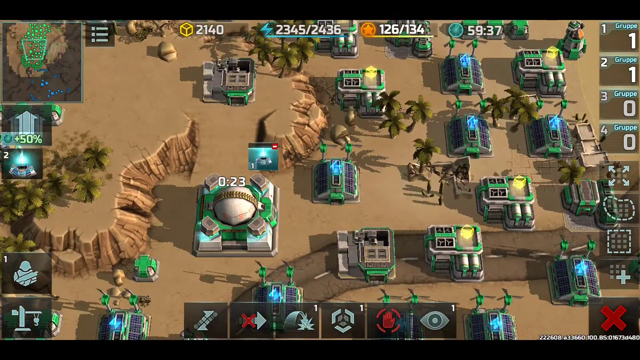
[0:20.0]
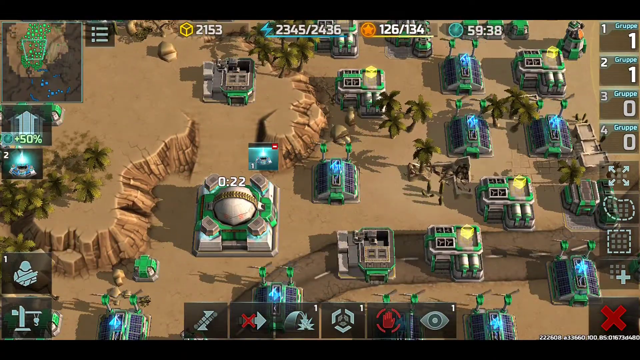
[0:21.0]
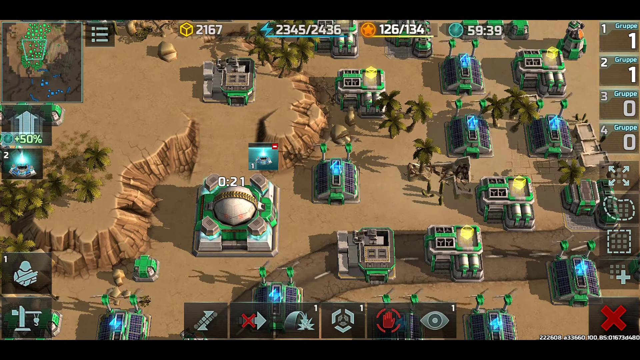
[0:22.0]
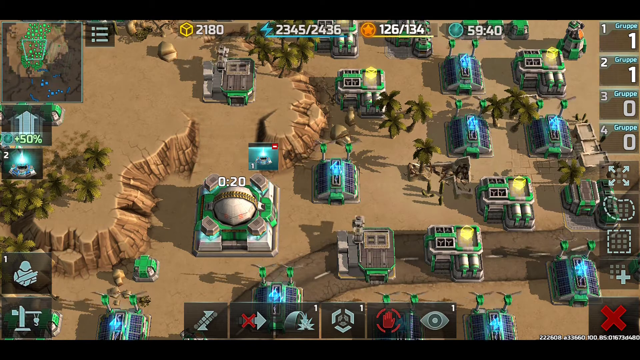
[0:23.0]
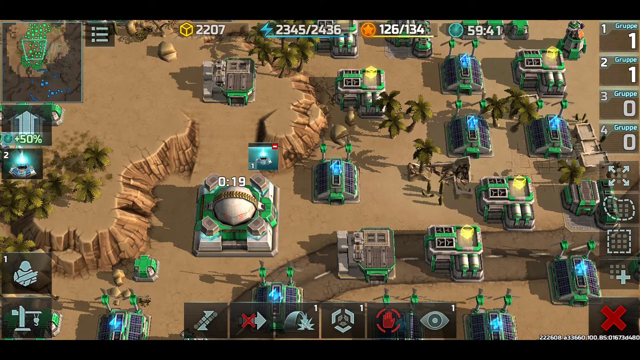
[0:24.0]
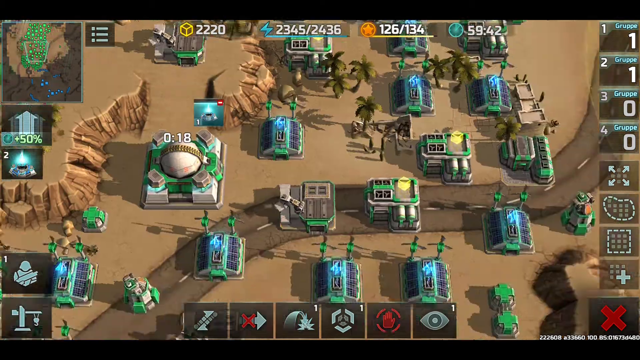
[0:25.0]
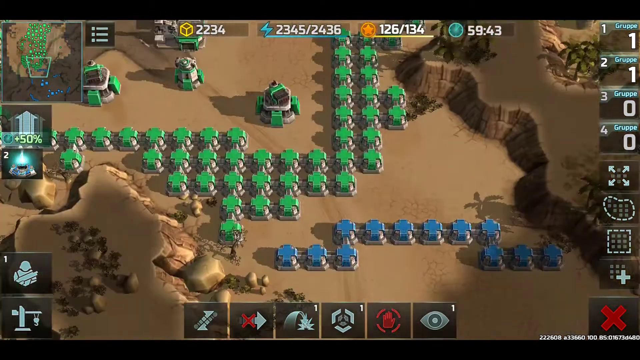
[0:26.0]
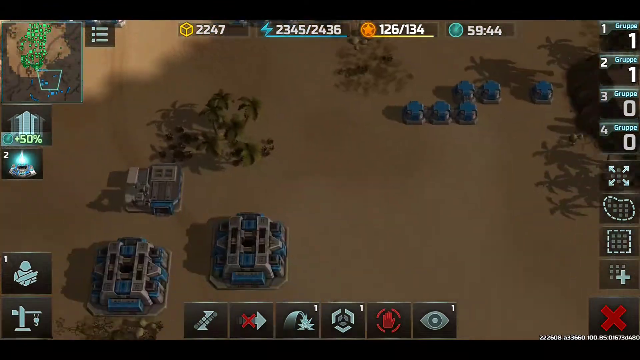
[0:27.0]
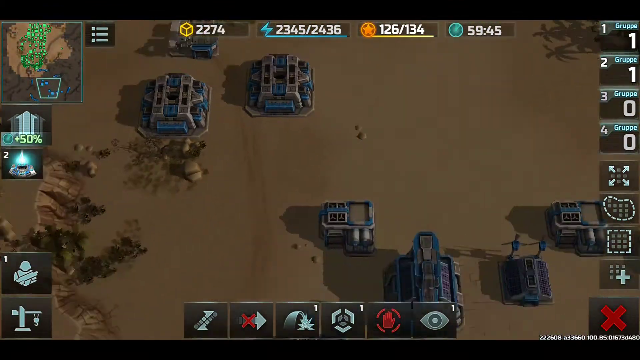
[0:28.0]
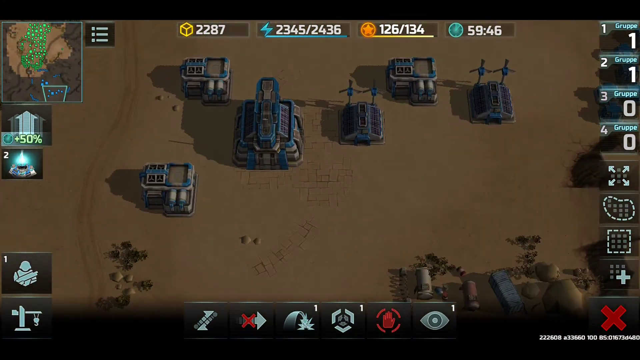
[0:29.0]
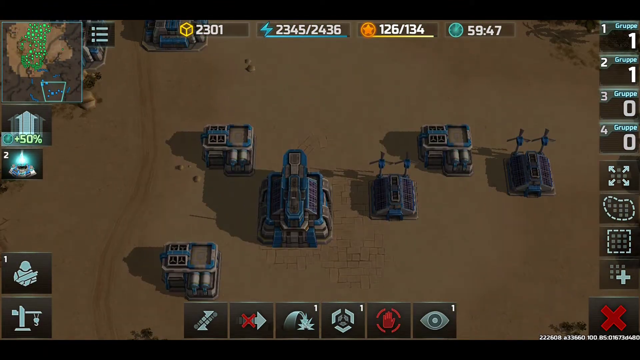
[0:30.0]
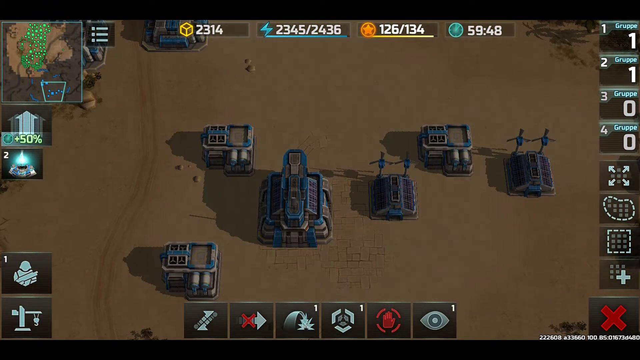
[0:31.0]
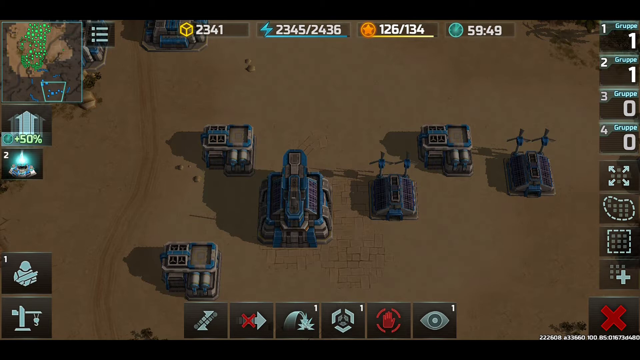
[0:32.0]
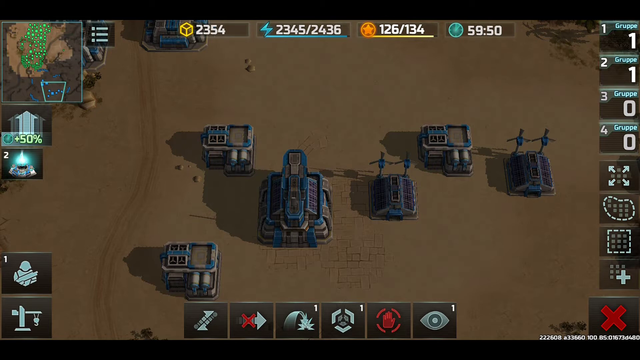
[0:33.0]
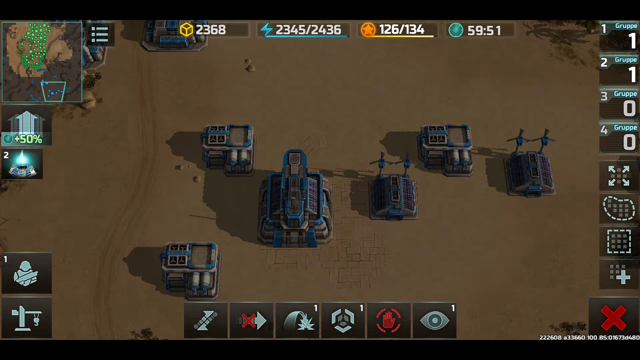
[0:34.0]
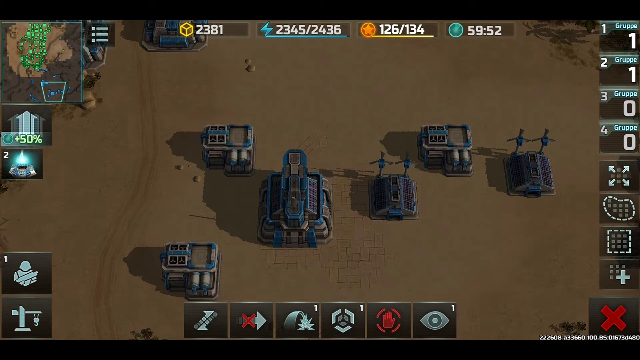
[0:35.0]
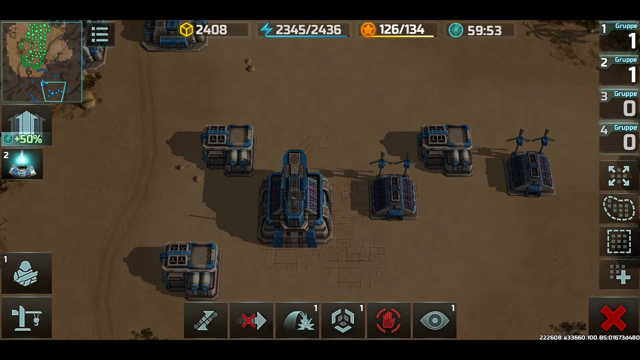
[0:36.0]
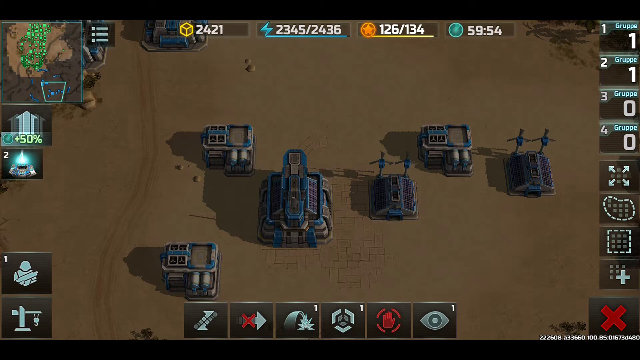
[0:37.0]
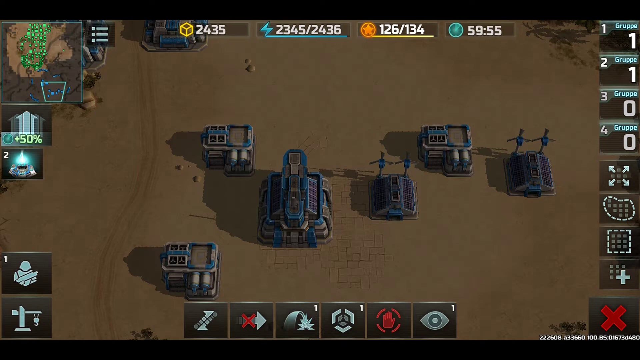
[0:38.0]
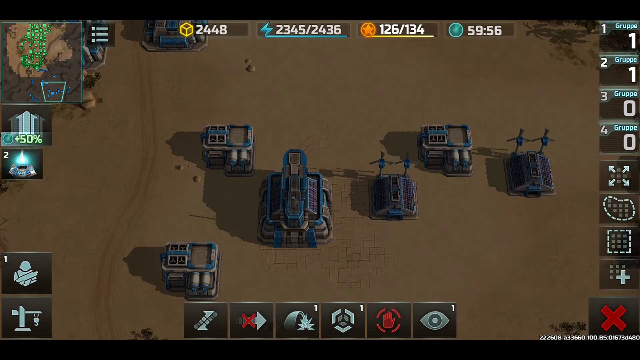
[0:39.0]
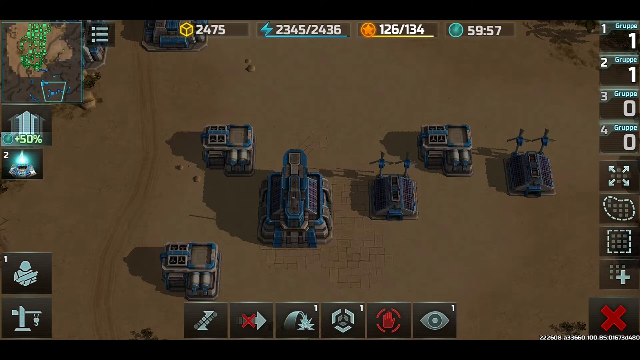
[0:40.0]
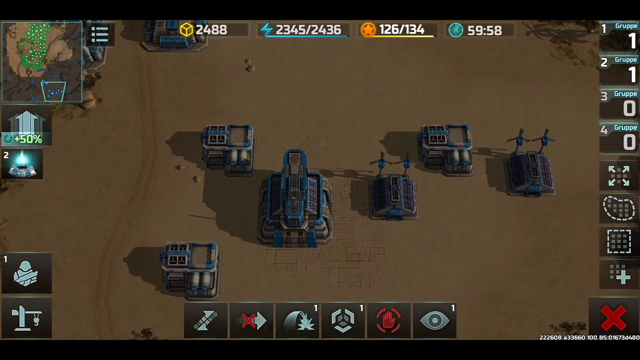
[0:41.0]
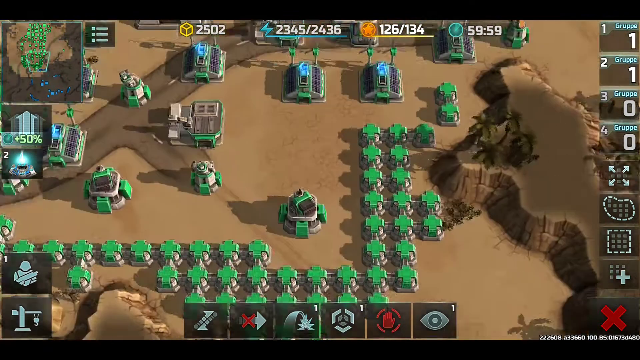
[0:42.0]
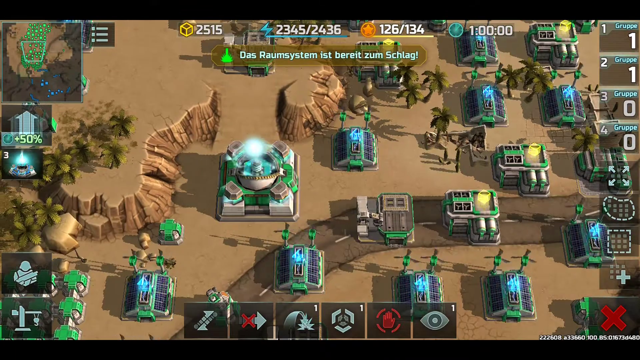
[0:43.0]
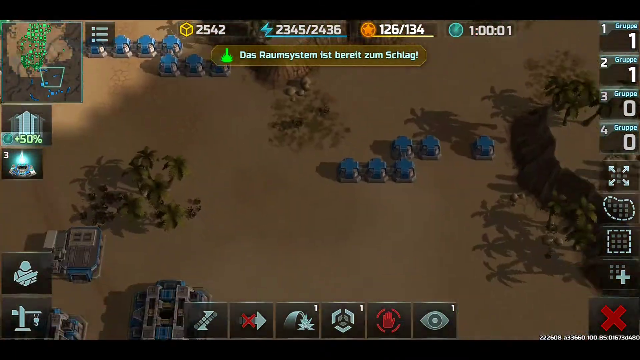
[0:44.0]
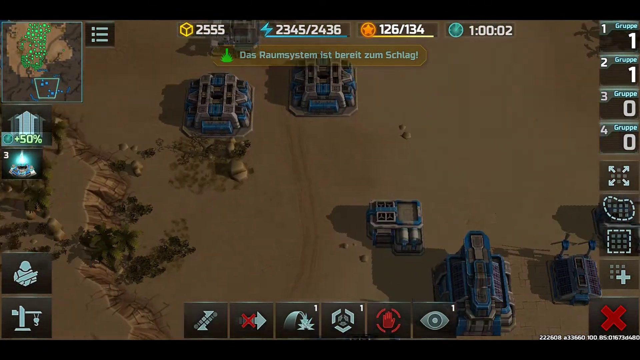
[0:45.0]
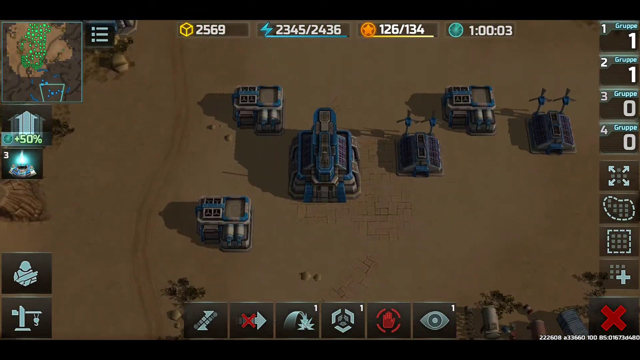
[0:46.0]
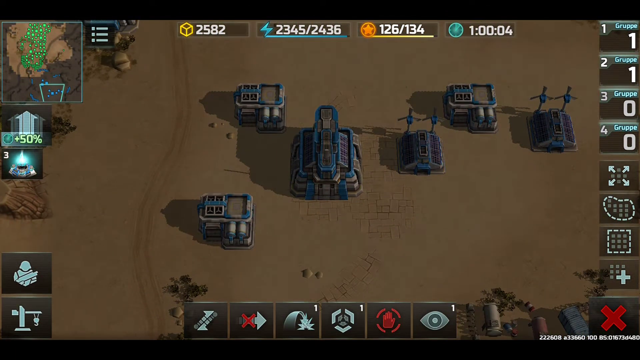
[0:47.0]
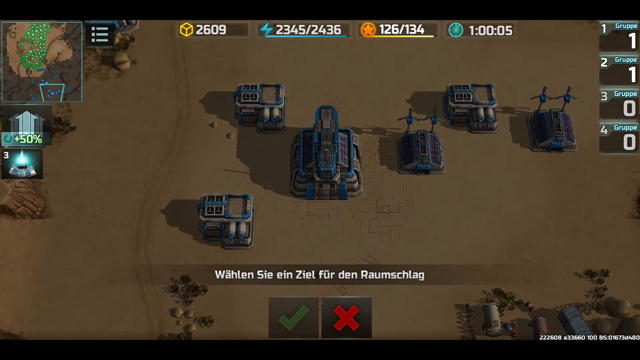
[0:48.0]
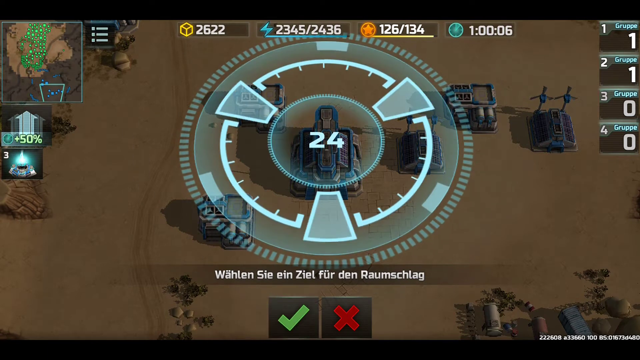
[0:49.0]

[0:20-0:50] The video game has structures almost like houses, with windmills turning very close to, if not on top of, some of the houses. There are army vehicles, and the vehicles and propellers are moving. Suddenly the vehicles park and kind of sit there for a moment, and the area where they are parked is darker. A dial appears, goes around and around, and then disappears. In the upper left-hand corner there is a smaller screen showing the territory, with something on the outside that measures around the land. The gray vehicles look like they are stationed, parked for a moment, and then the action begins again as the view combs the territory with all the vehicles. The dial appears, with German words underneath.